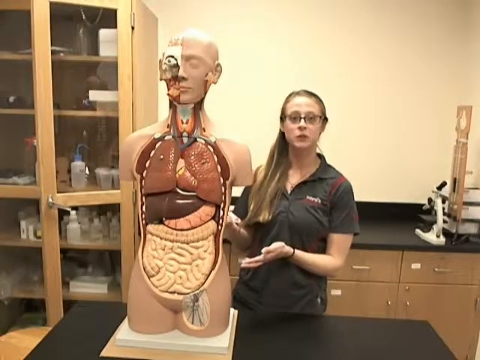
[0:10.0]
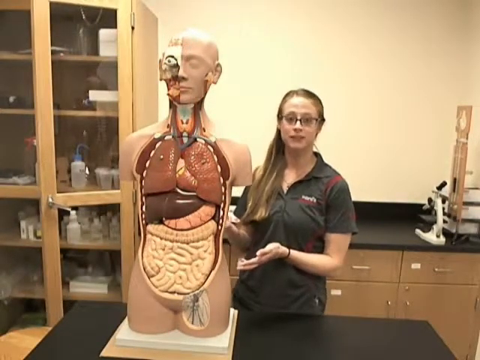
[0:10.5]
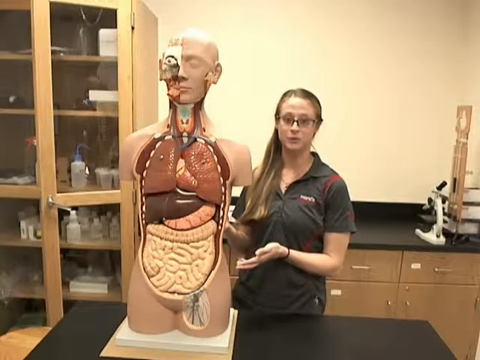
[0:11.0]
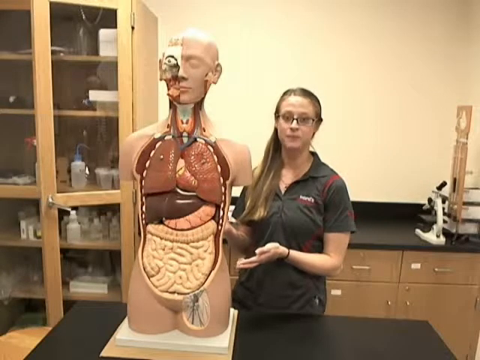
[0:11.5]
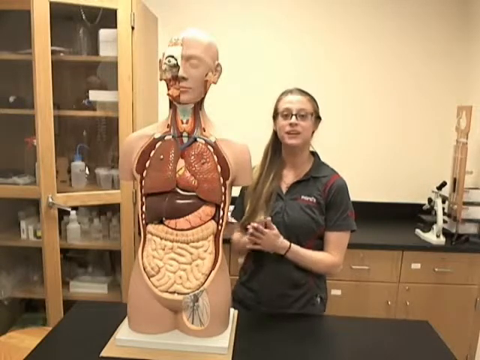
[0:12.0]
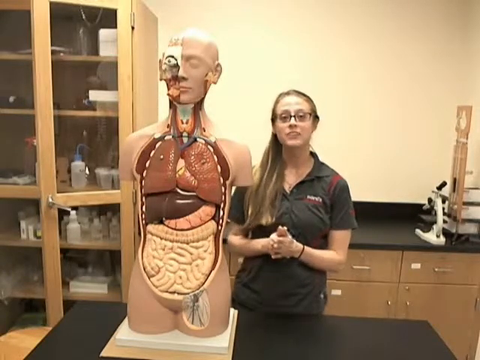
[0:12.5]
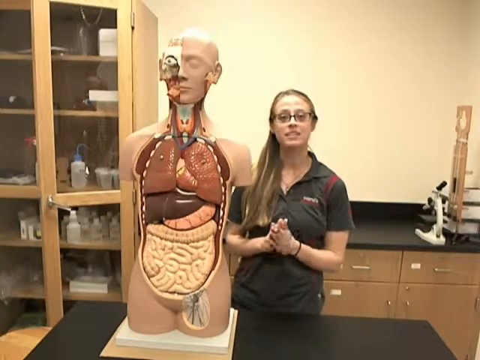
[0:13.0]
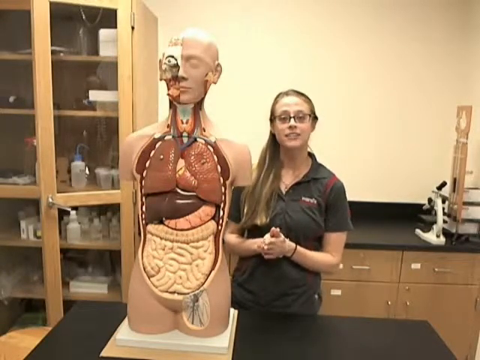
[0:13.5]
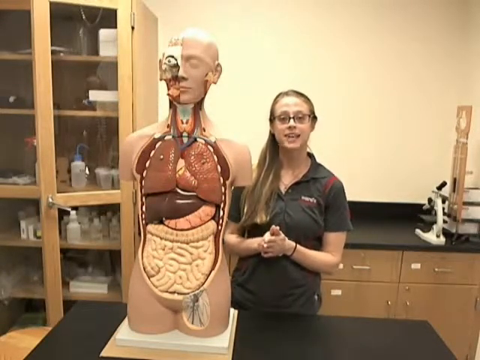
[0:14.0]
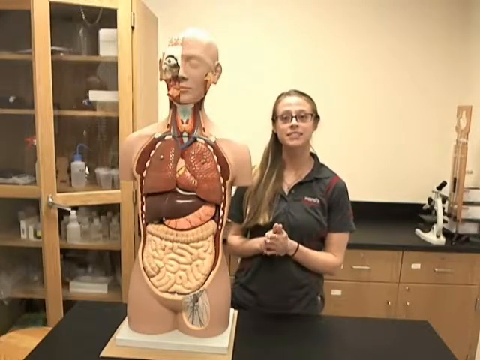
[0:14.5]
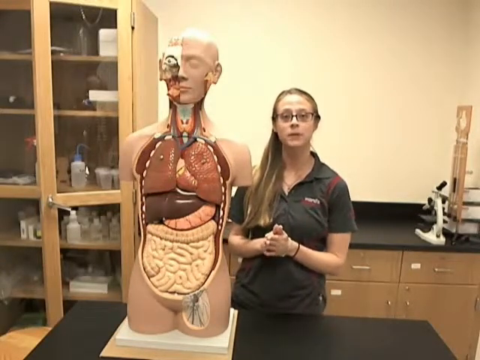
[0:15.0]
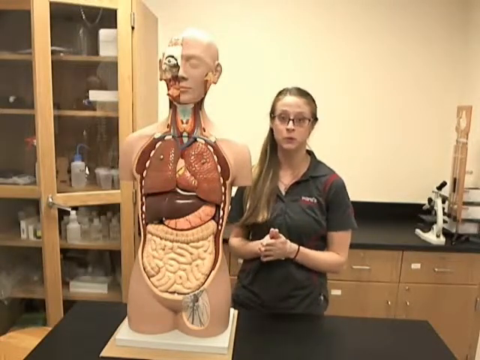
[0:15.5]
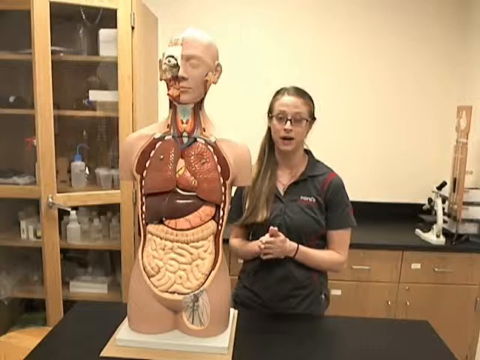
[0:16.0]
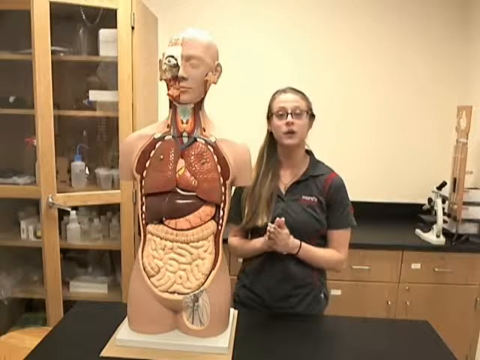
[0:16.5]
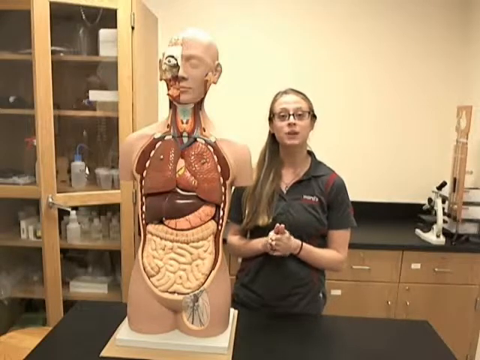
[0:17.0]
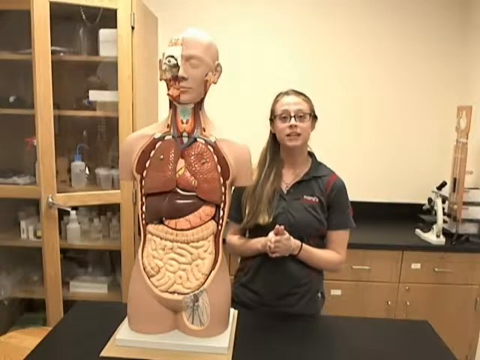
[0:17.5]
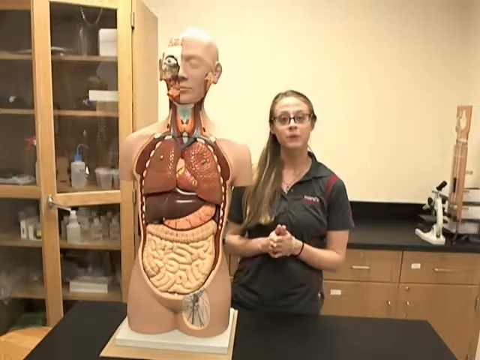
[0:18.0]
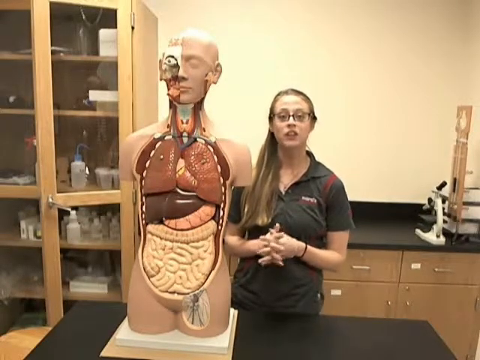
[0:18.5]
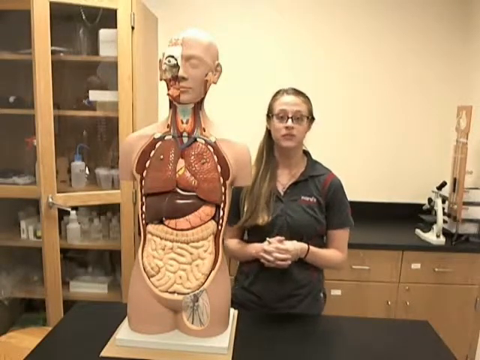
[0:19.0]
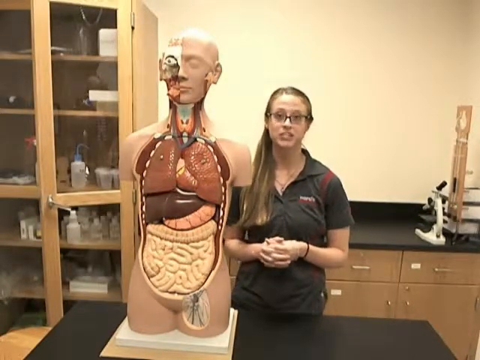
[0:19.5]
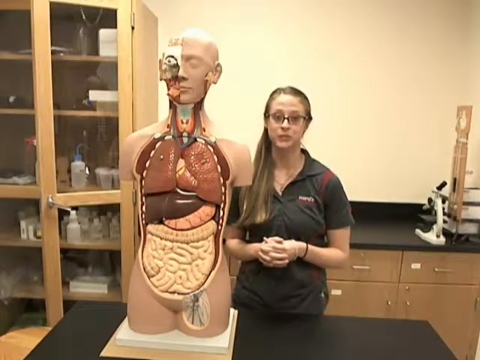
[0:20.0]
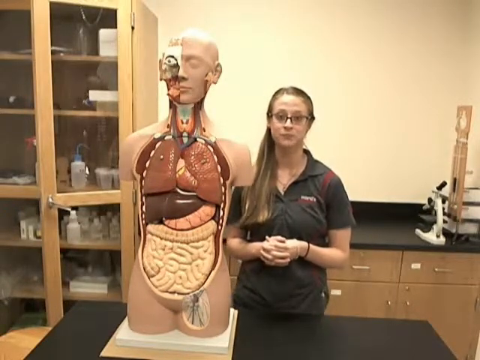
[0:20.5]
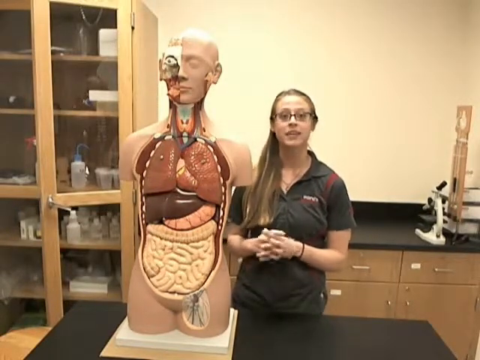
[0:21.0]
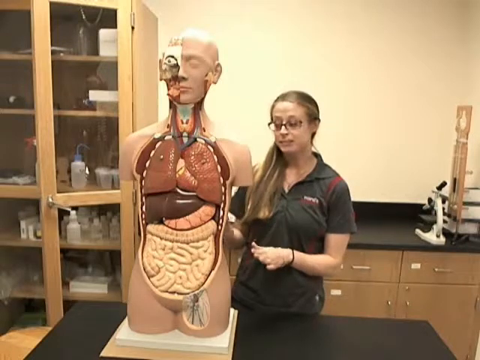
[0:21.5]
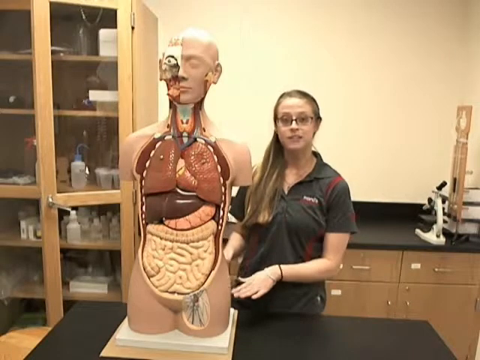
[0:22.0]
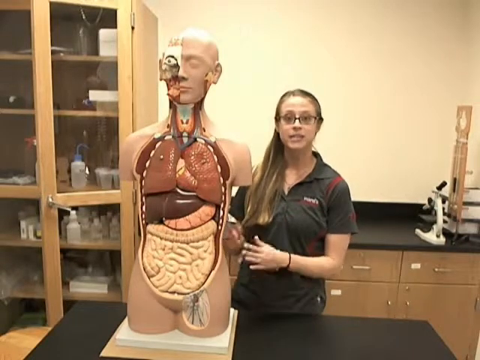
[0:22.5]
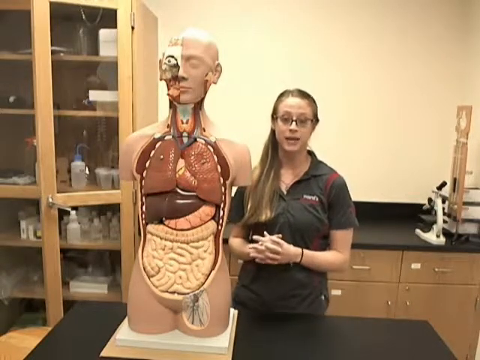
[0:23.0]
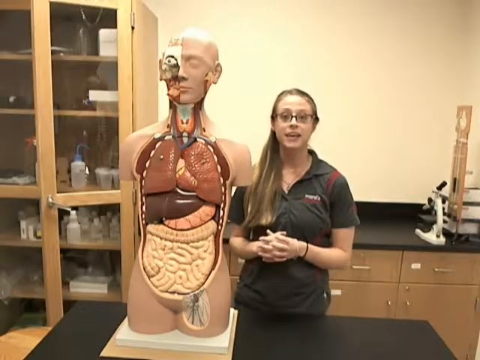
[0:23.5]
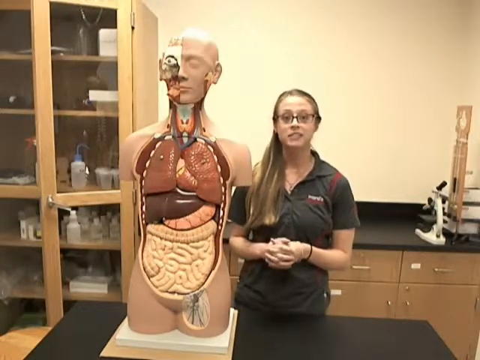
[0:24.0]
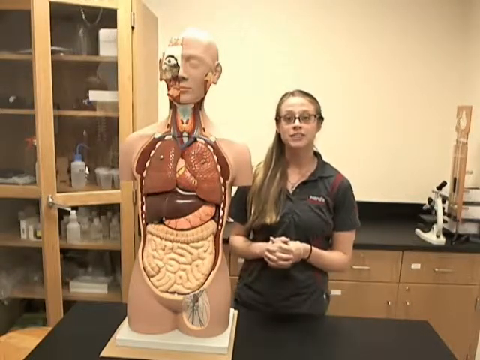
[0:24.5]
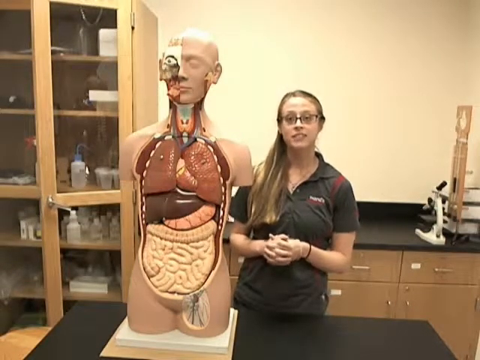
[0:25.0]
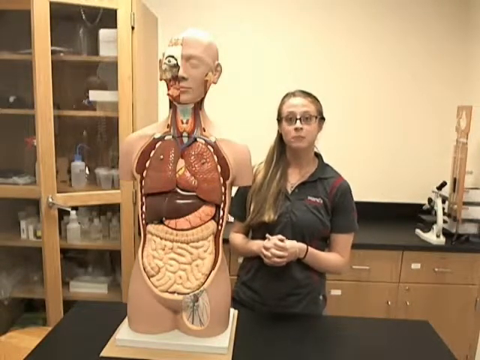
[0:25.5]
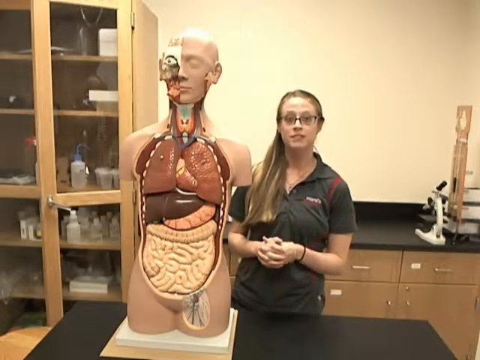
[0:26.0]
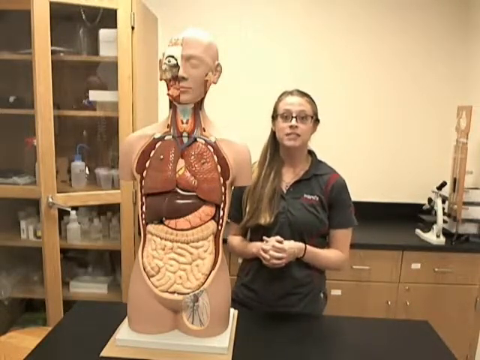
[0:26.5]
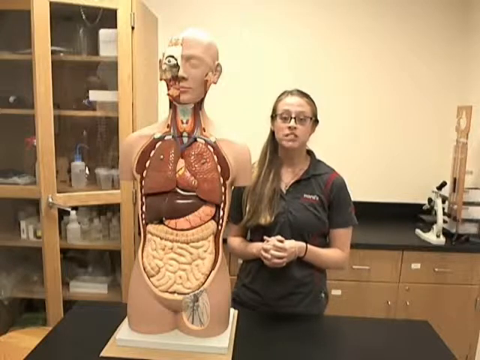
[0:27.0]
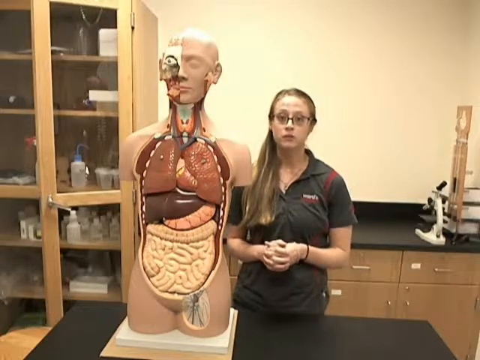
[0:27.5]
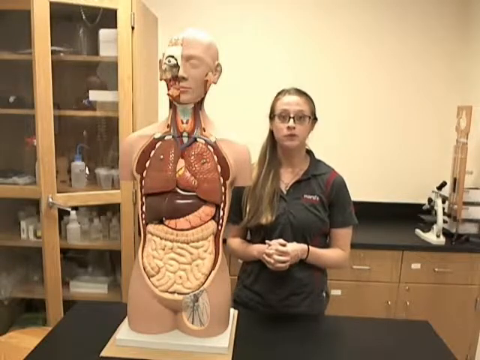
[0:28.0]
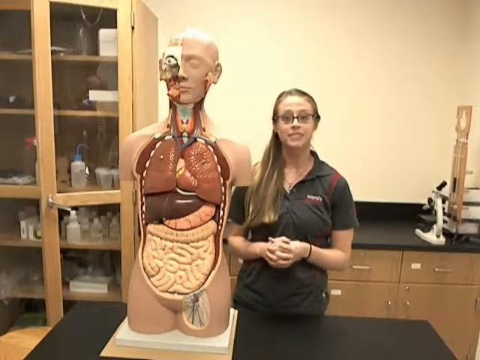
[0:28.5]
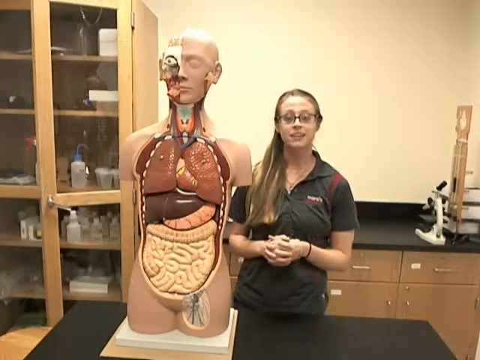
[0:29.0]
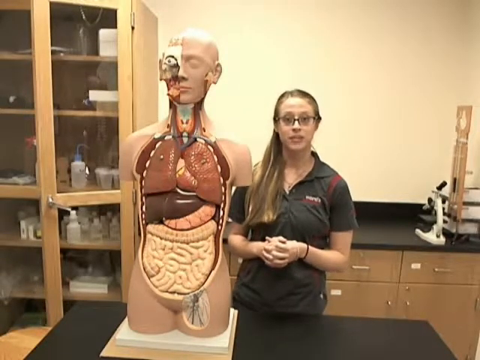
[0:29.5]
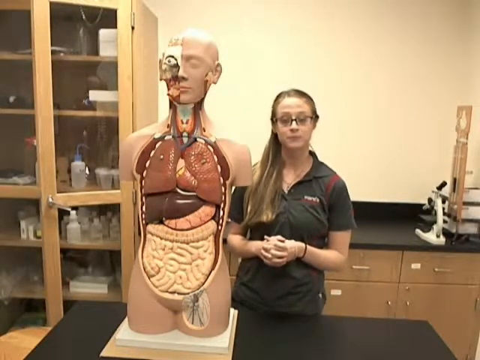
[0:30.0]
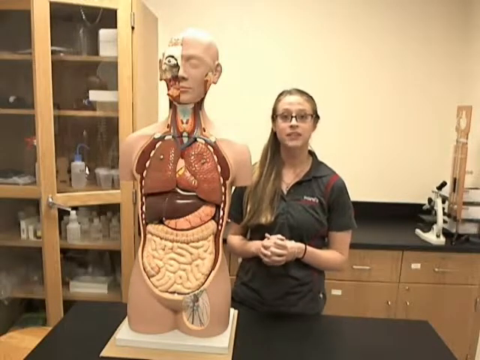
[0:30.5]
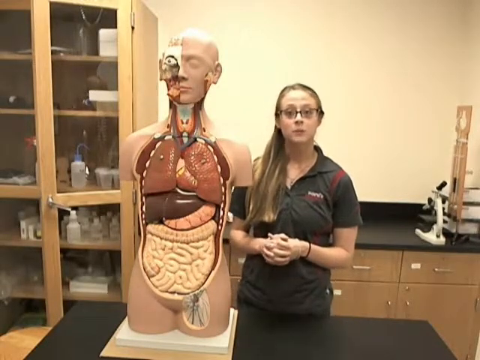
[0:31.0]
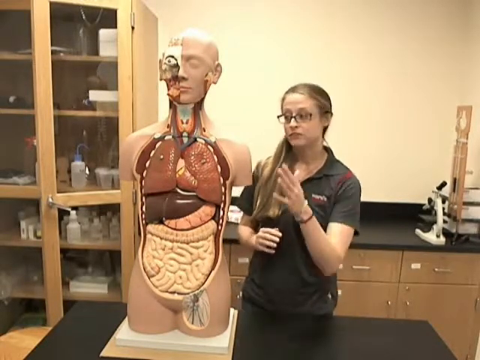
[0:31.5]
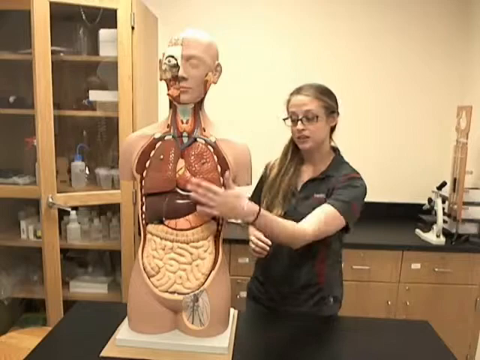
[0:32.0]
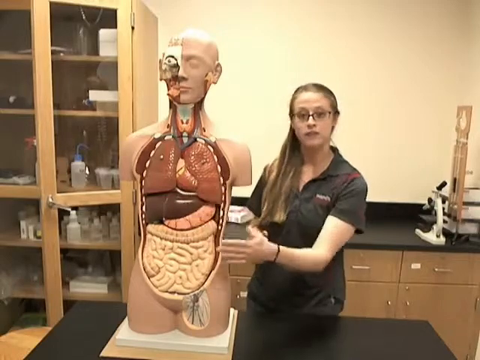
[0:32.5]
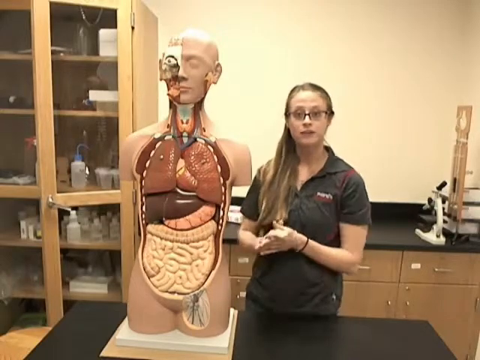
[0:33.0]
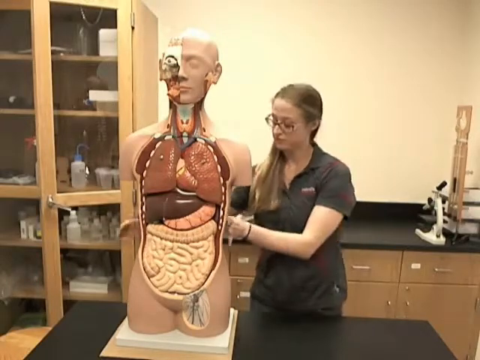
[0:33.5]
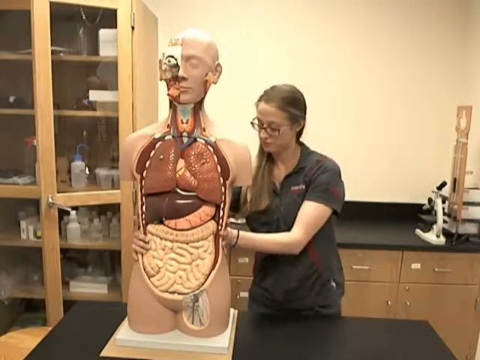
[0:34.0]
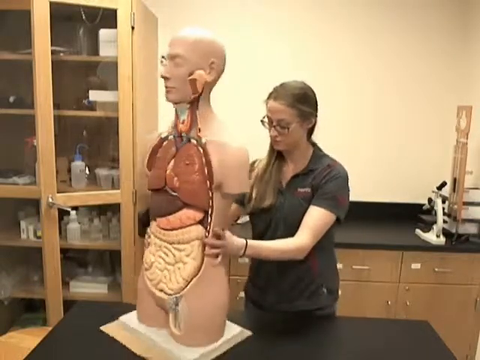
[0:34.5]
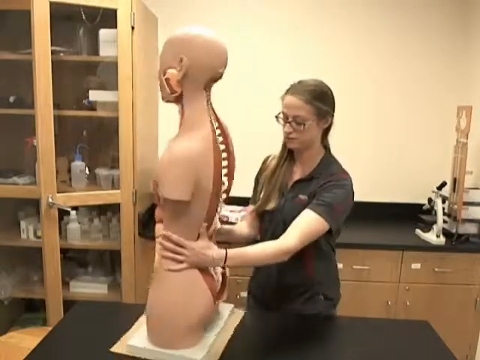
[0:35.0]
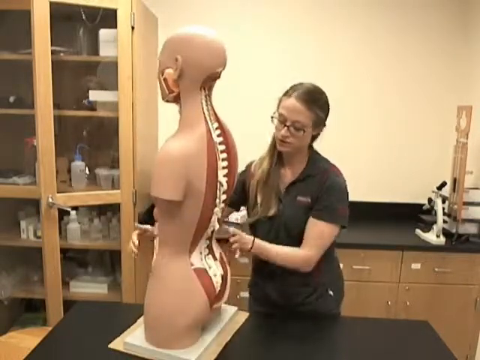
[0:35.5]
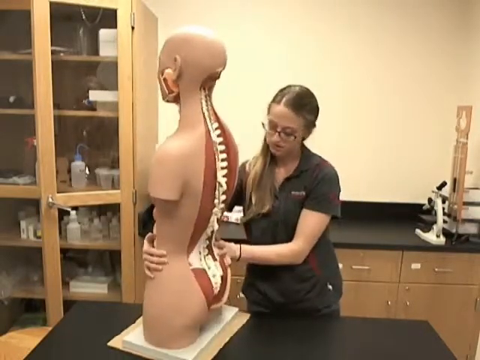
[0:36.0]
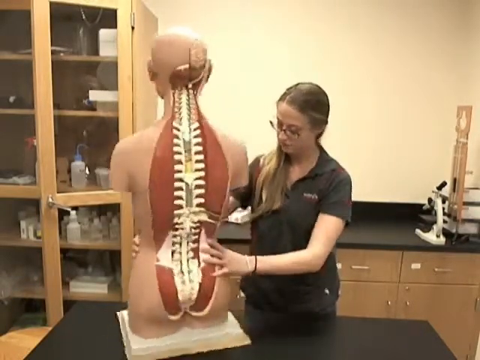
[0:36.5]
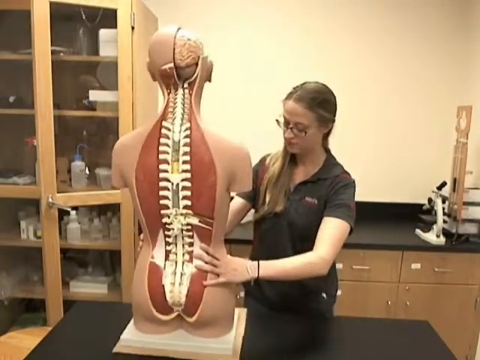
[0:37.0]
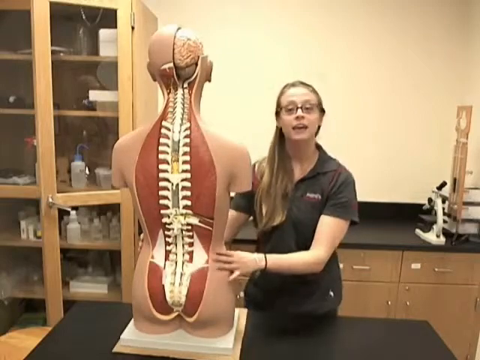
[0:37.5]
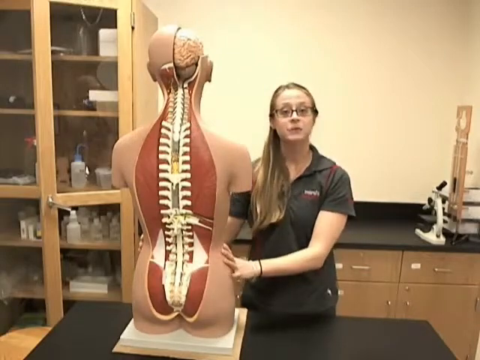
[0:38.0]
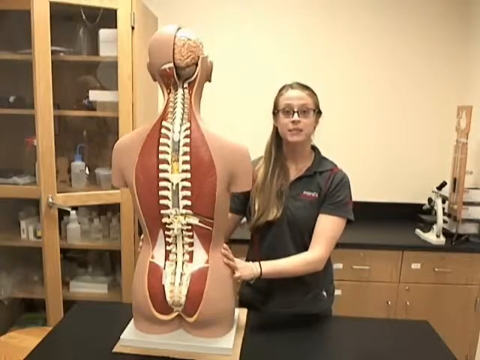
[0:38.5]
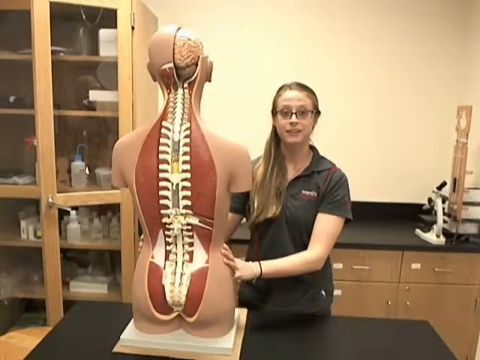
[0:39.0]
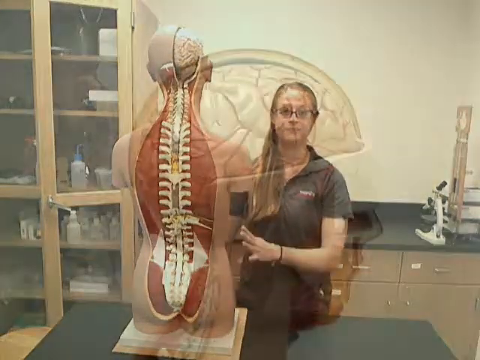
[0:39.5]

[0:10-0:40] A young lady stands toward the left of the mannequin, on the right from the viewer's perspective. She briefly holds or touches it with her right hand, then brings her hands together palm to palm and folds her fingers so they mesh together, interlocking and unlocking her fingers as she speaks. She gestures to the front of the model with her left hand, then takes it with her left hand partially on its side and back and her right hand on its right hip, and turns the mannequin so its back side can be seen. The mannequin's back displays the inside of the torso, and the front displays the inside of the abdominal and chest areas. The mannequin's face has skin over the left half and no skin over the right half, displaying the inside of the face on the right.